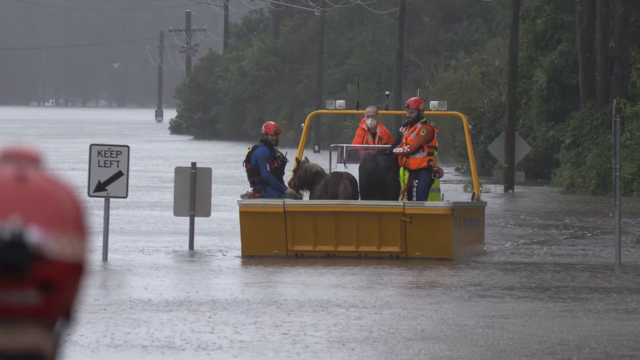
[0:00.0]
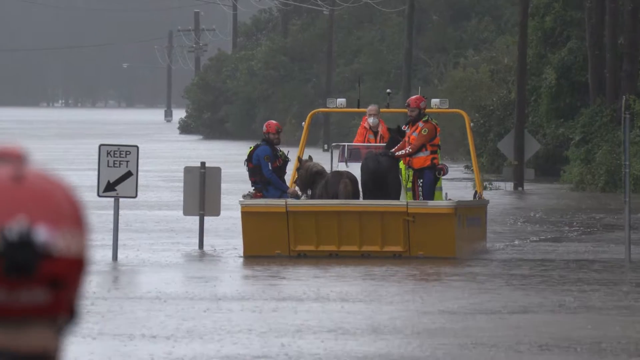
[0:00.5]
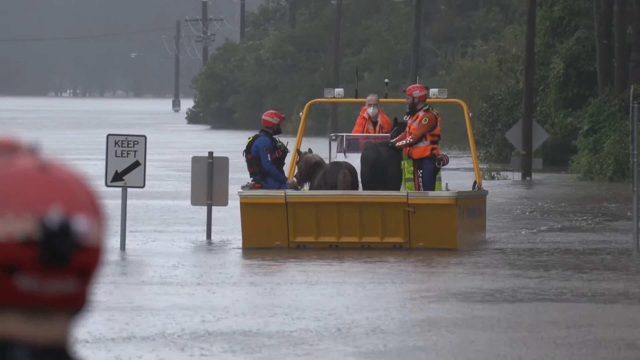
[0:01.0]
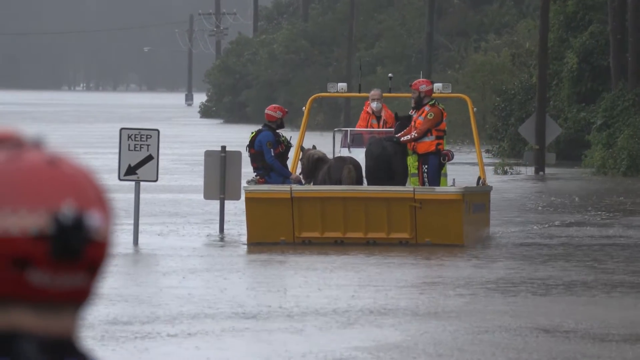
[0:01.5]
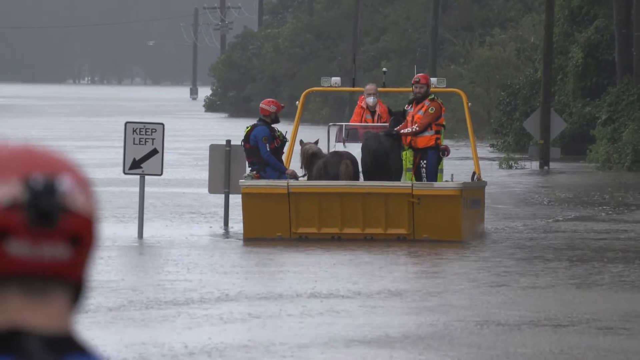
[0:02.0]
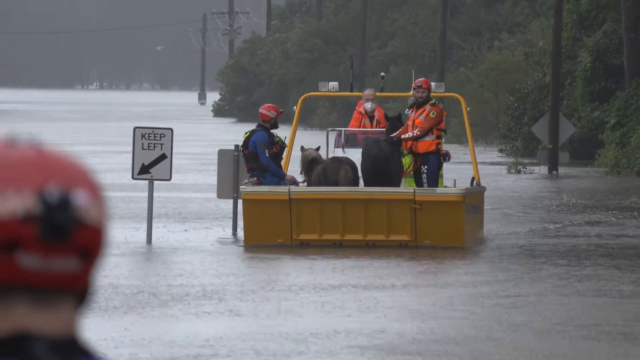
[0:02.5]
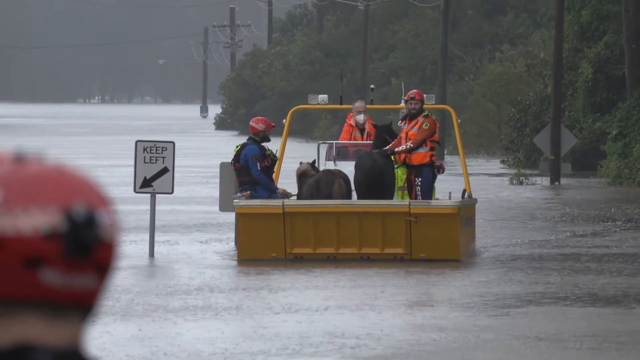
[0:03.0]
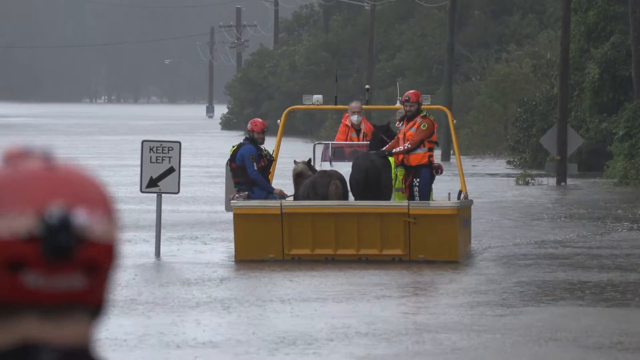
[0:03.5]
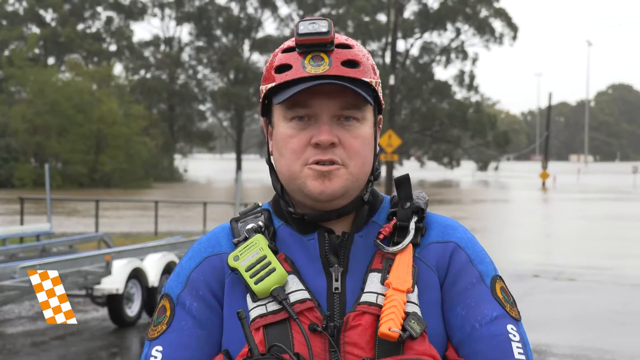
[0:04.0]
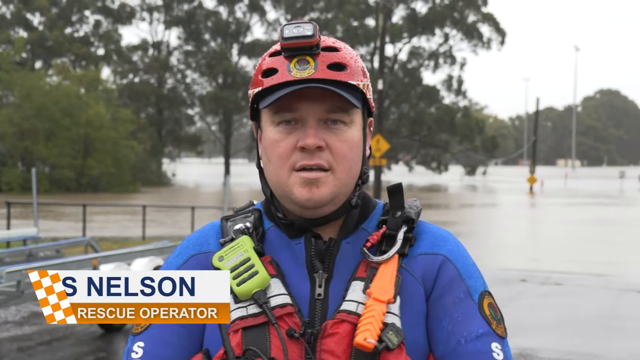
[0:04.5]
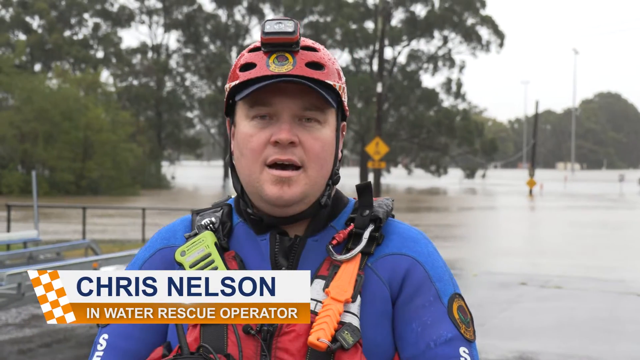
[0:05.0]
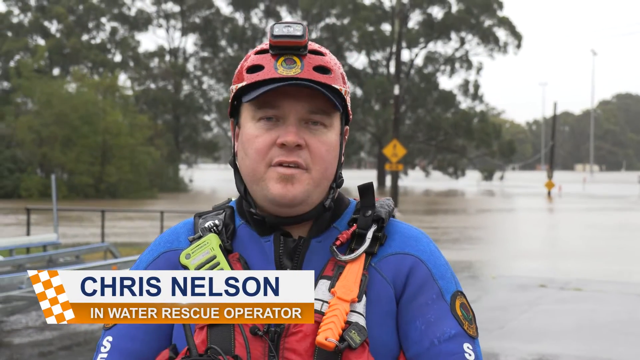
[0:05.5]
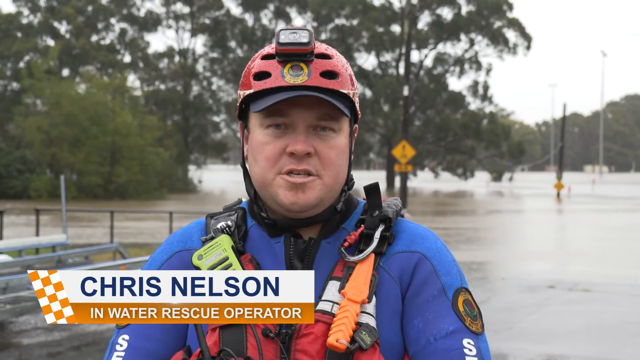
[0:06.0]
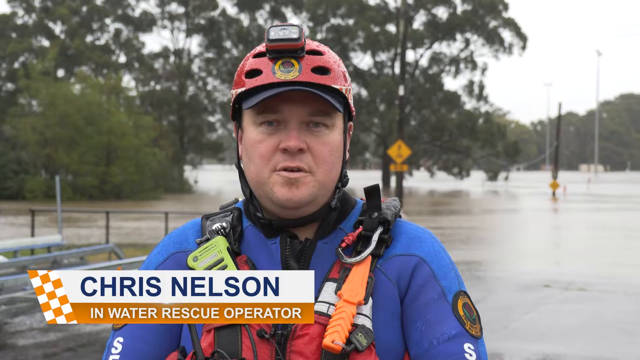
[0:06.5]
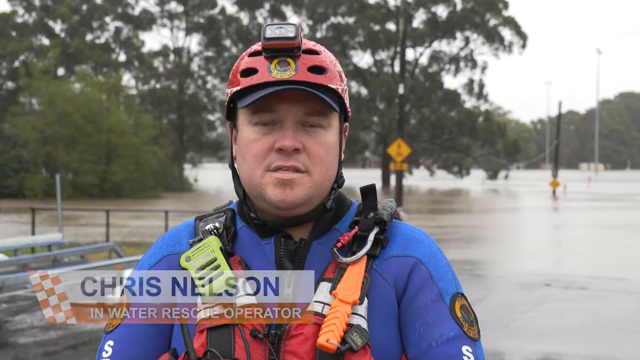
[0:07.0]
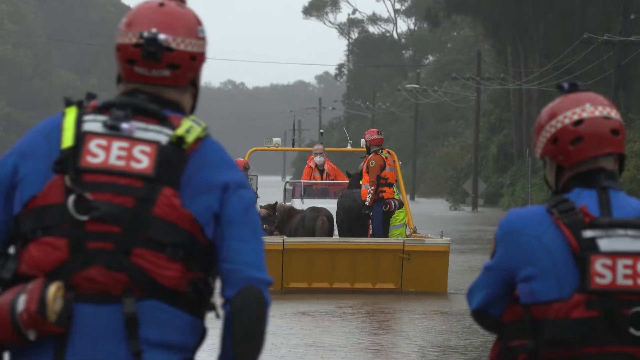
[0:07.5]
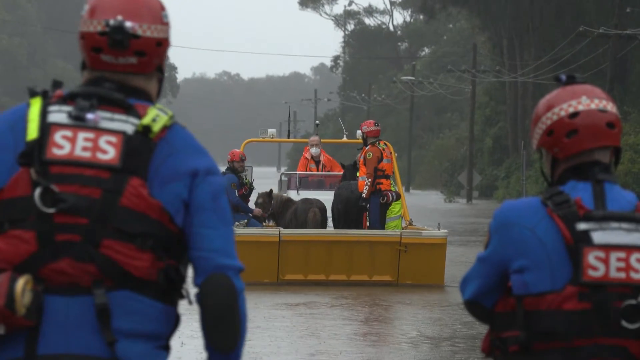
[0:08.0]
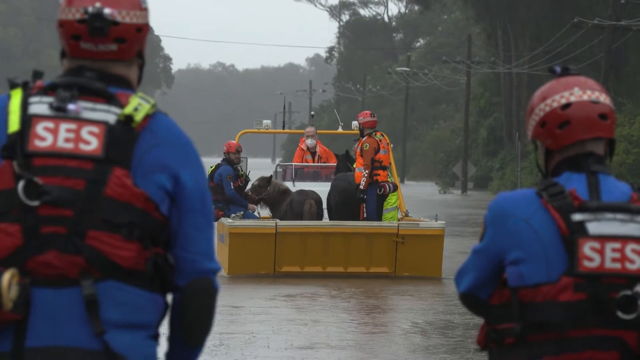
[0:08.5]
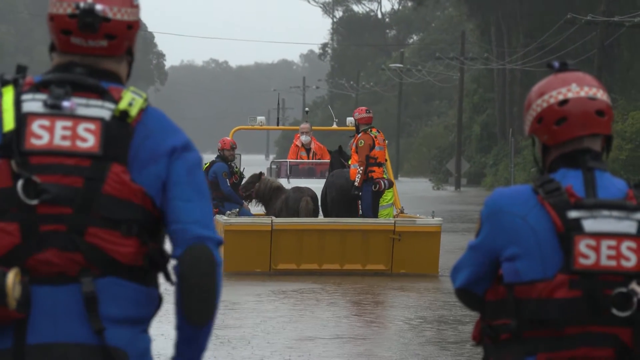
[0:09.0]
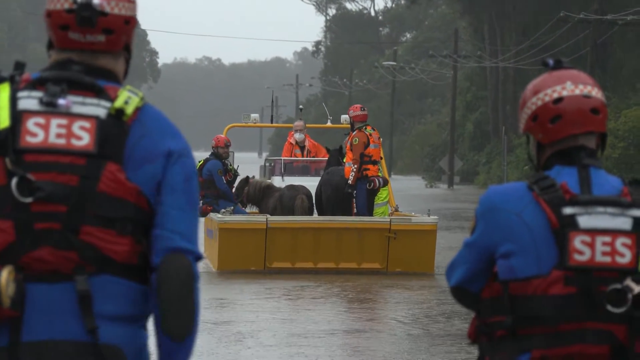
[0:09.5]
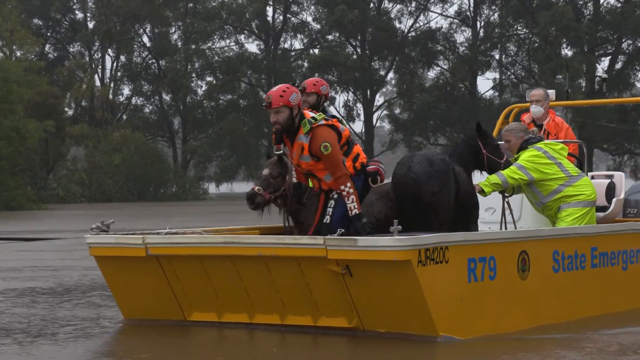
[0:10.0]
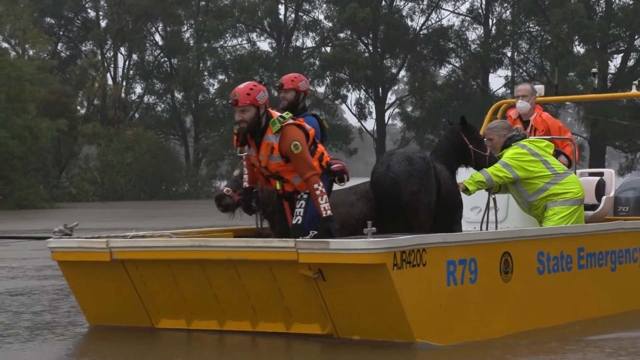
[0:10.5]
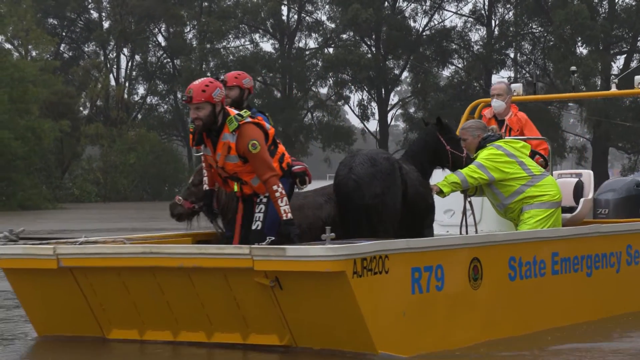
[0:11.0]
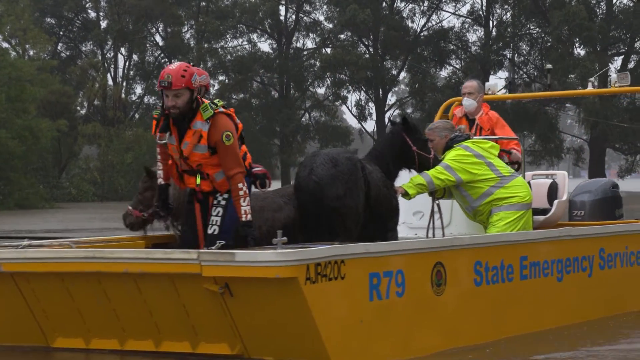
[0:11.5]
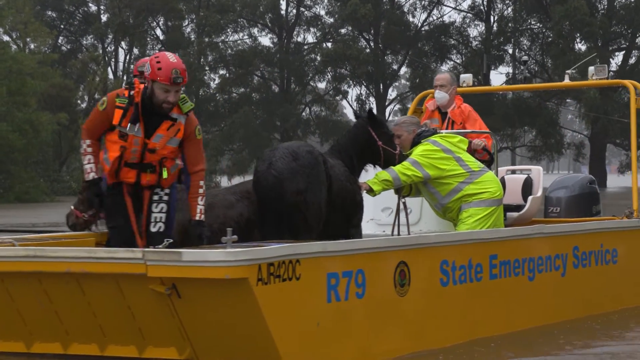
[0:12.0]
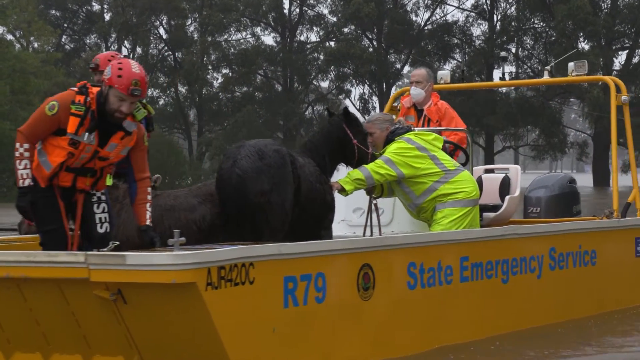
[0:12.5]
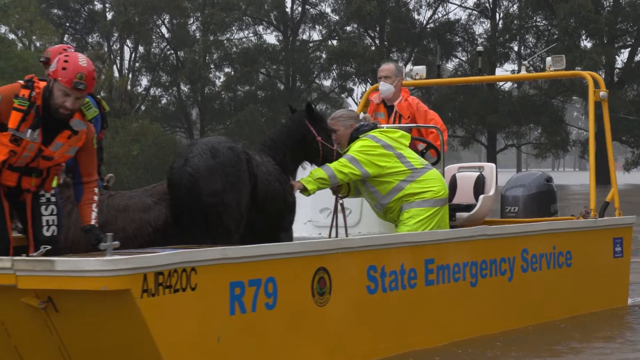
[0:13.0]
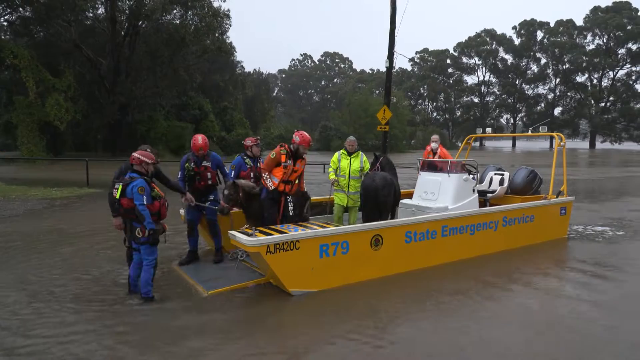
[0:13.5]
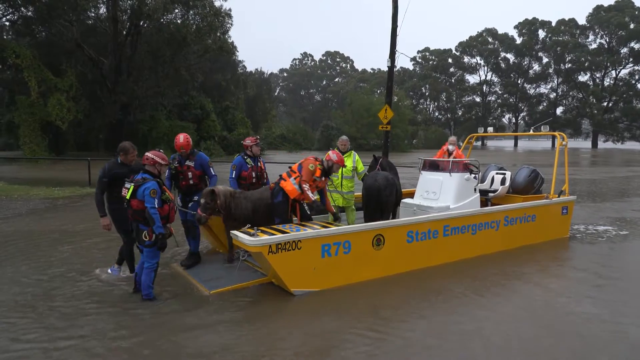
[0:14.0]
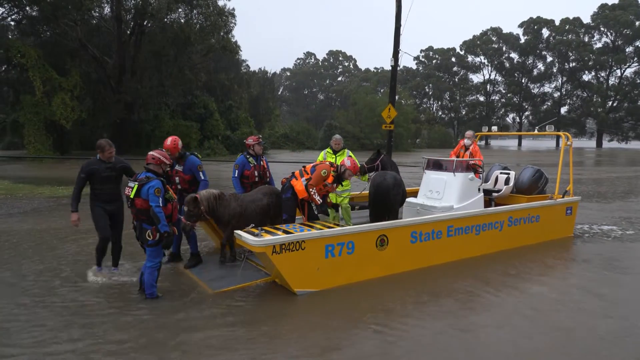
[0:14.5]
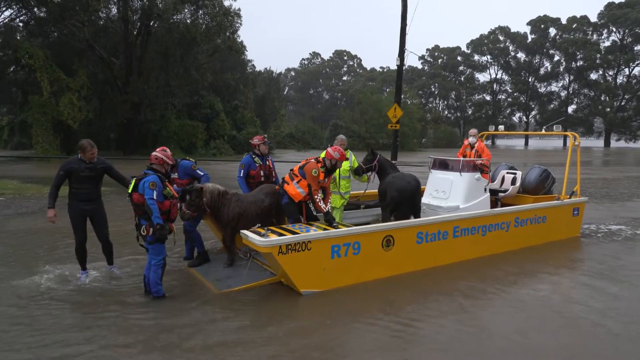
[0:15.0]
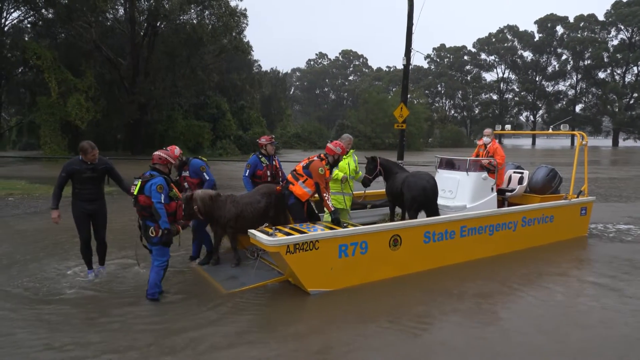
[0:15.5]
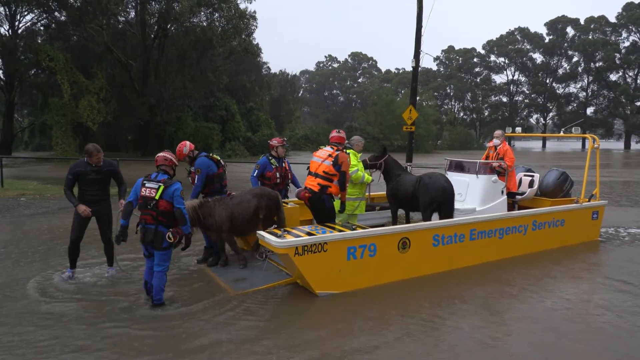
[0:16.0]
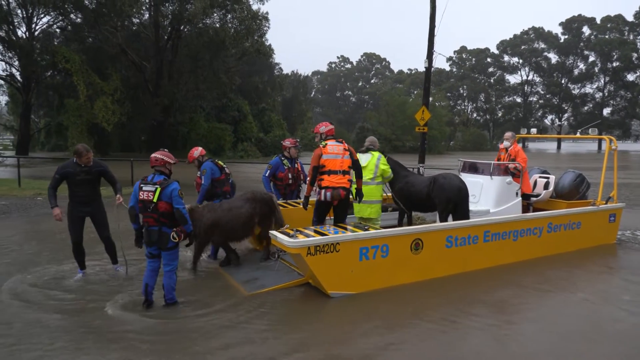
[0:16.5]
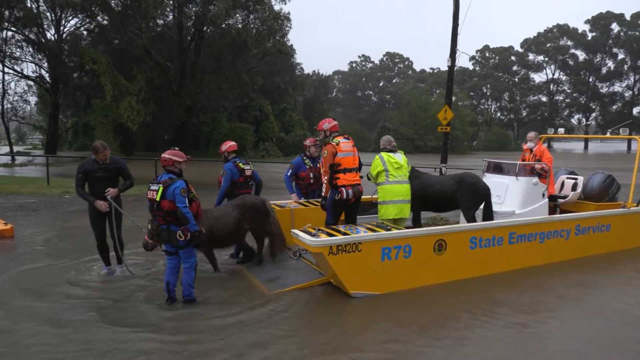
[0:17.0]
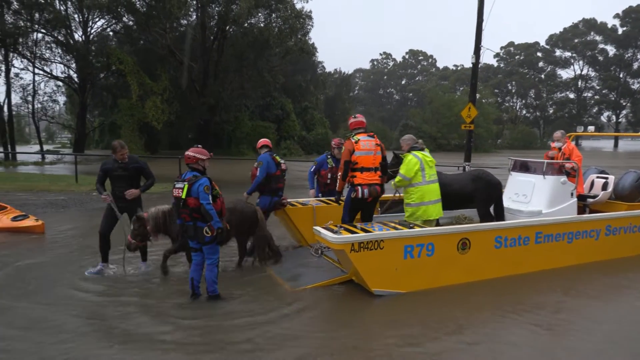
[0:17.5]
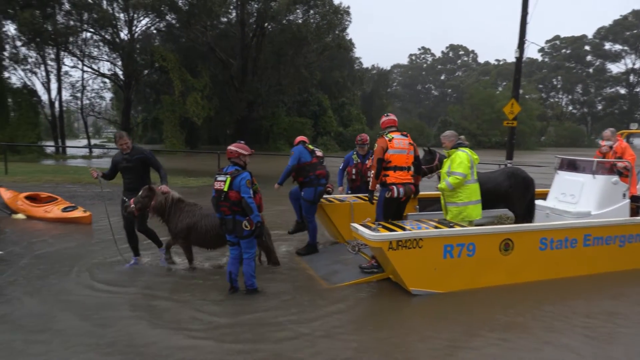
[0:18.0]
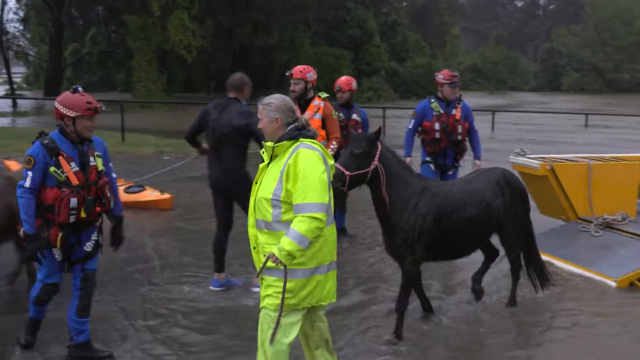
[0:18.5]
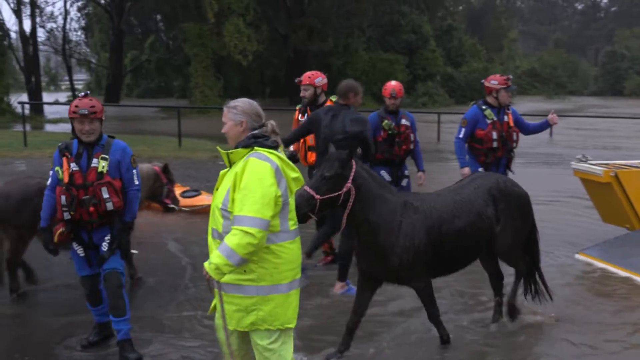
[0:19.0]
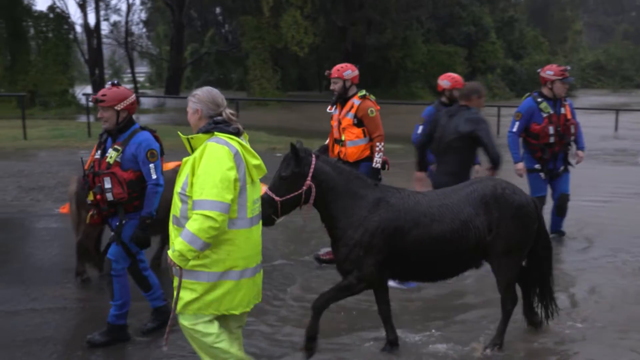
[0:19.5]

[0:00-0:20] A flooded road area is shown, with what looks like a yellow vehicle with a flat bottom carrying three men wearing safety gear and helmets, along with what looks like a pony and a horse in the boat. The area appears to be a road that has been flooded, and keep left signs look to be quite highly submerged. The video then cuts to what looks like an interview with a man named Chris Nelson, part of the in-water rescue team, who wears the same helmet and safety gear as the men in the boat, so they all appear to be part of the same rescue operation. Writing on the boat reads "state emergency service", marking it as an official response to what looks like a lot of flooding. As the camera moves around, a quite large flooded area is visible, possibly next to a river or something similar. The men then unload two horses off the boat.